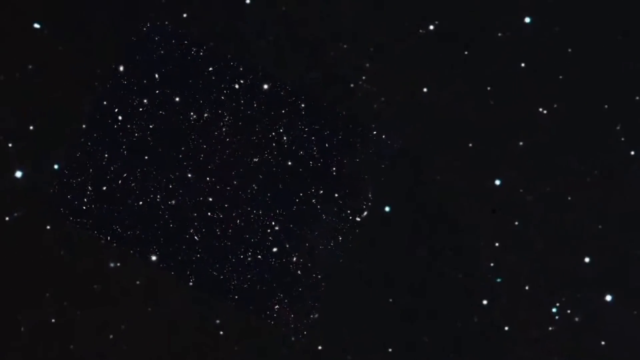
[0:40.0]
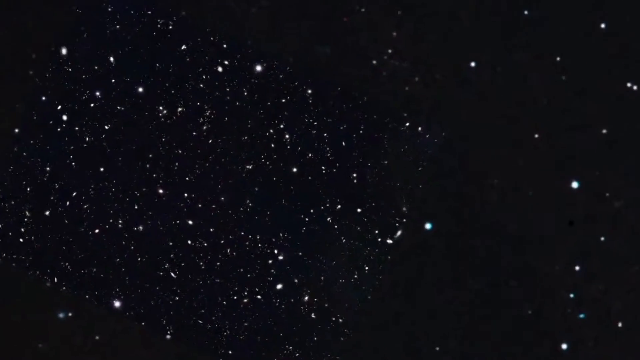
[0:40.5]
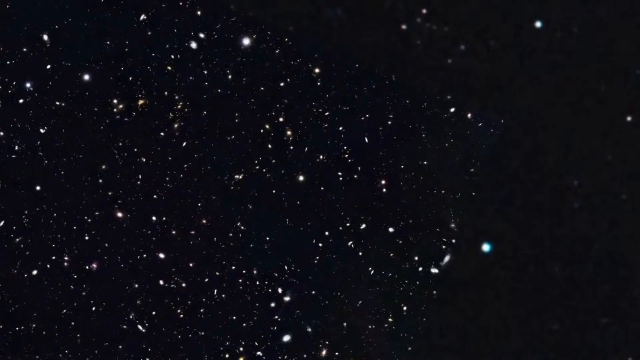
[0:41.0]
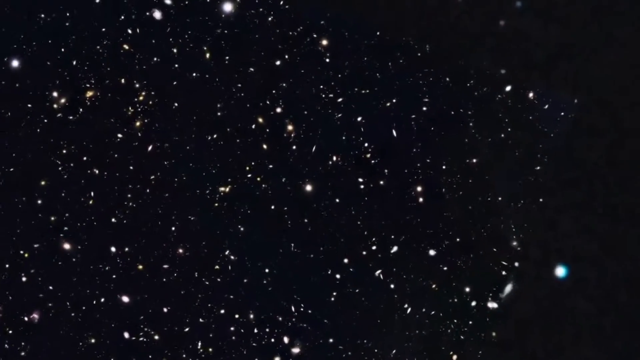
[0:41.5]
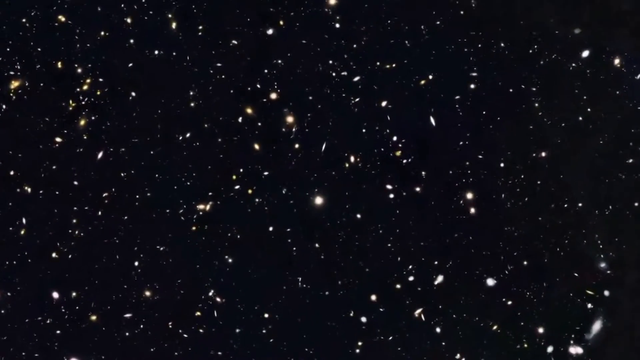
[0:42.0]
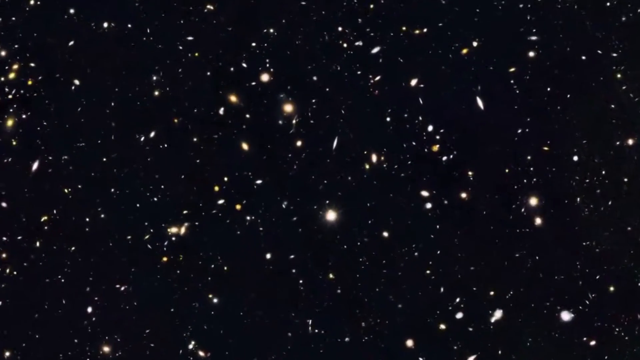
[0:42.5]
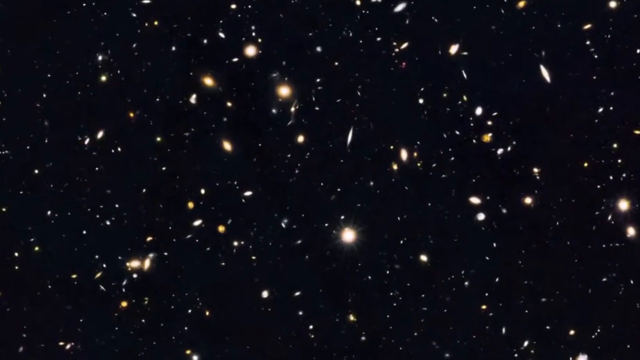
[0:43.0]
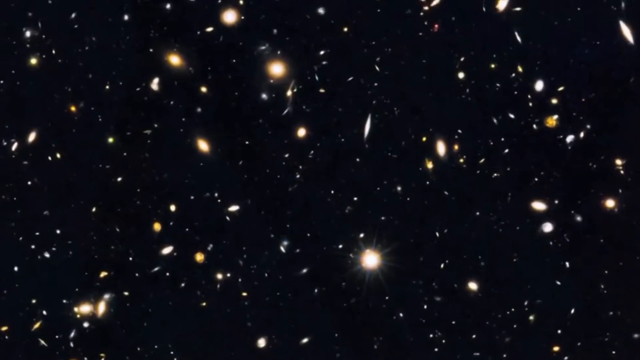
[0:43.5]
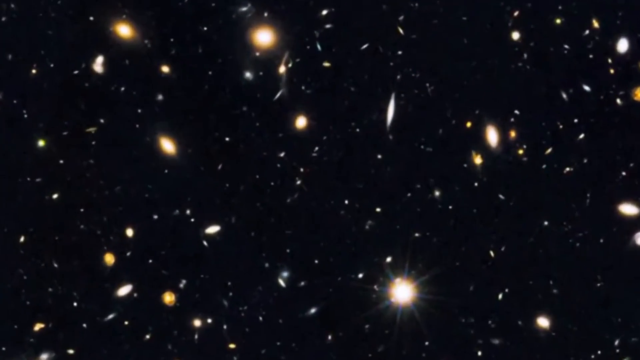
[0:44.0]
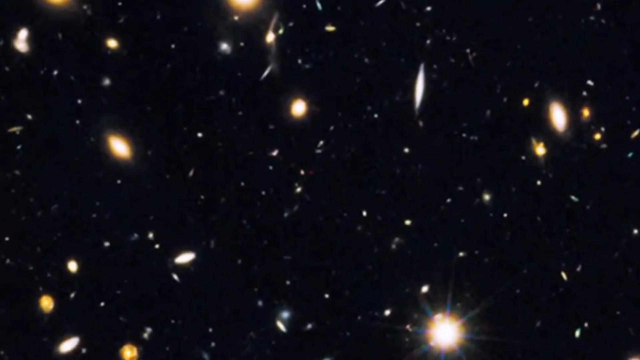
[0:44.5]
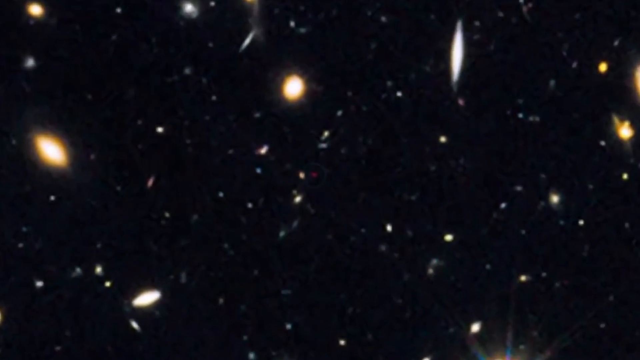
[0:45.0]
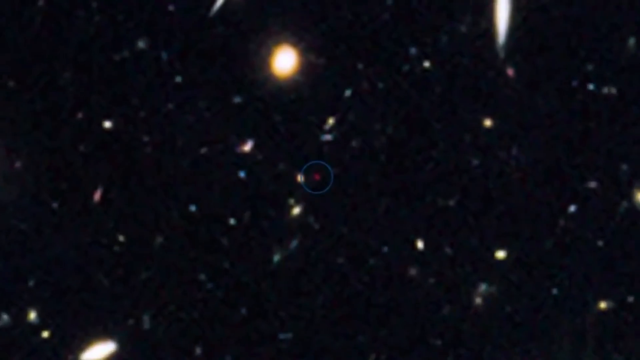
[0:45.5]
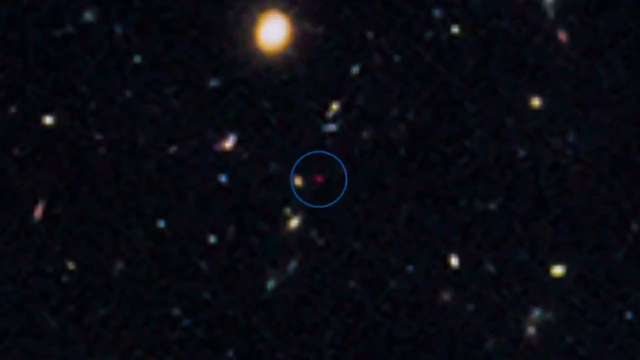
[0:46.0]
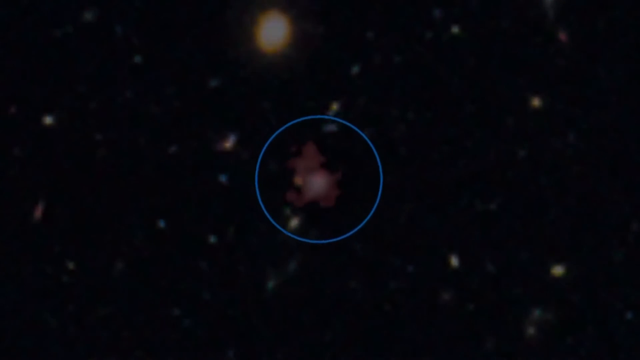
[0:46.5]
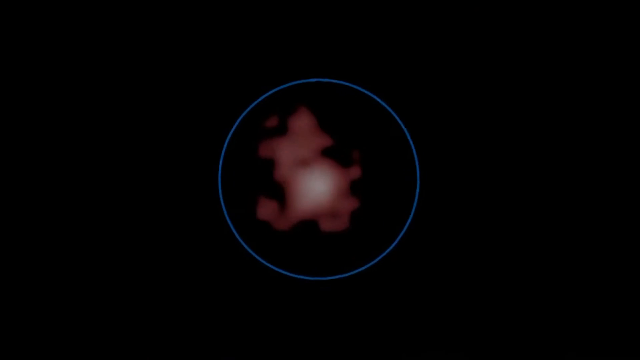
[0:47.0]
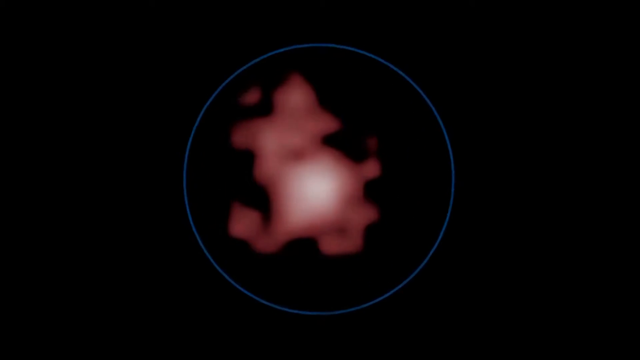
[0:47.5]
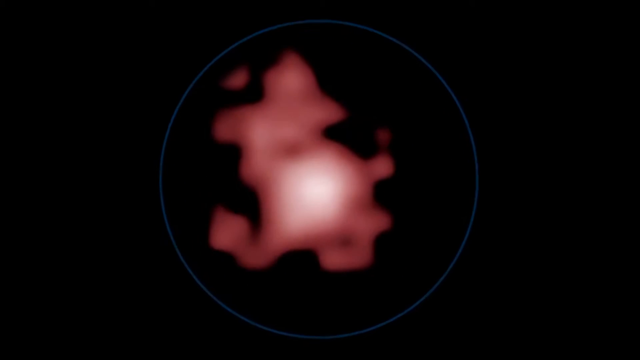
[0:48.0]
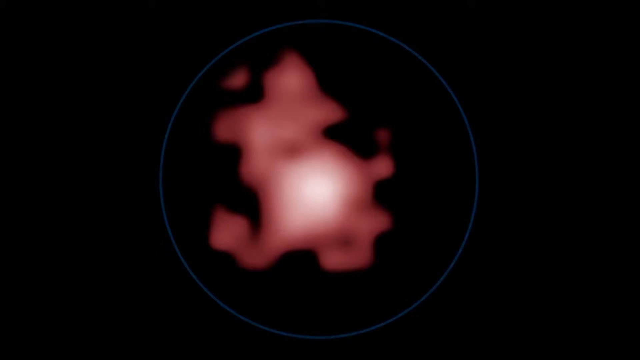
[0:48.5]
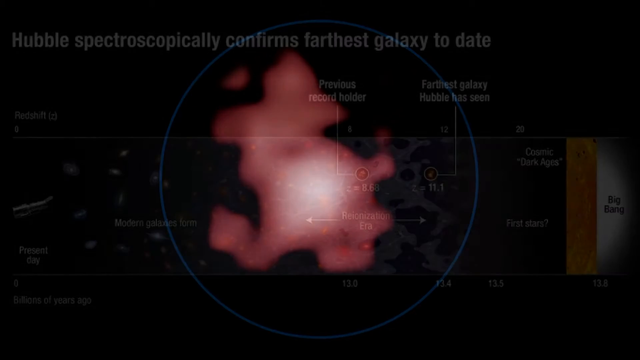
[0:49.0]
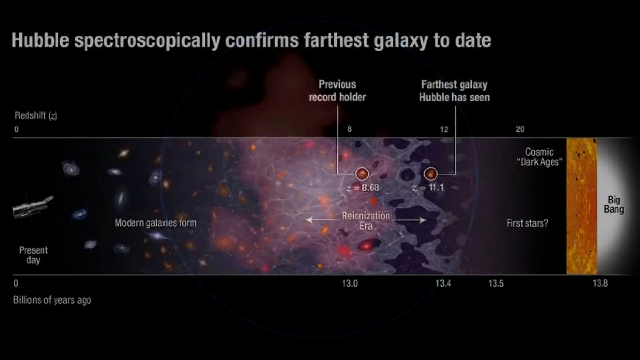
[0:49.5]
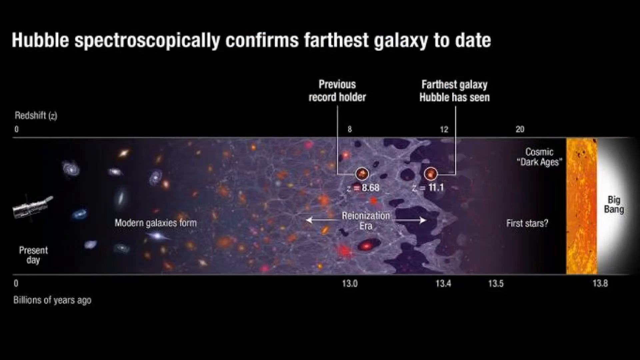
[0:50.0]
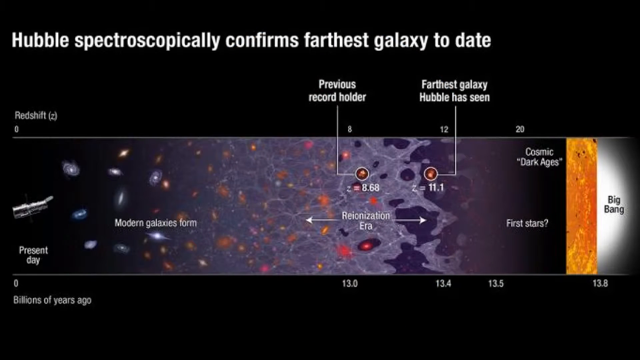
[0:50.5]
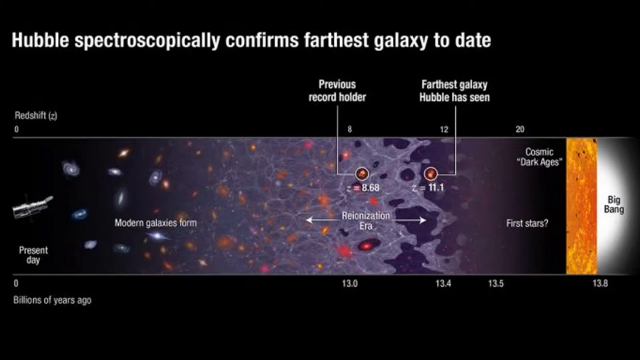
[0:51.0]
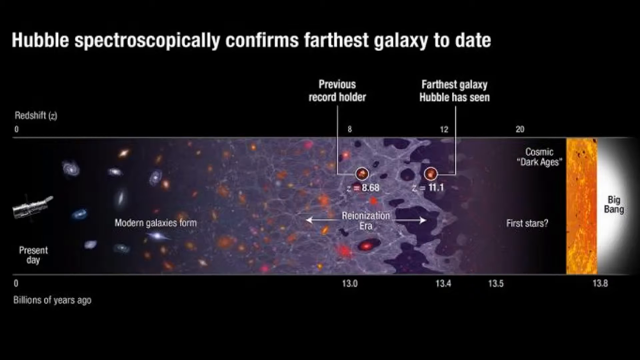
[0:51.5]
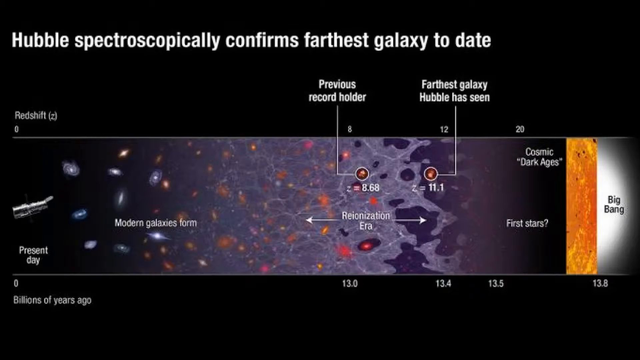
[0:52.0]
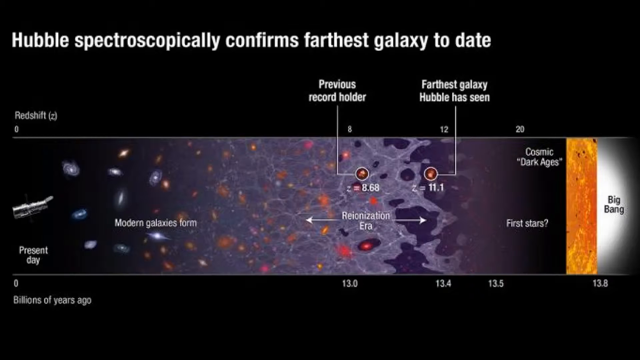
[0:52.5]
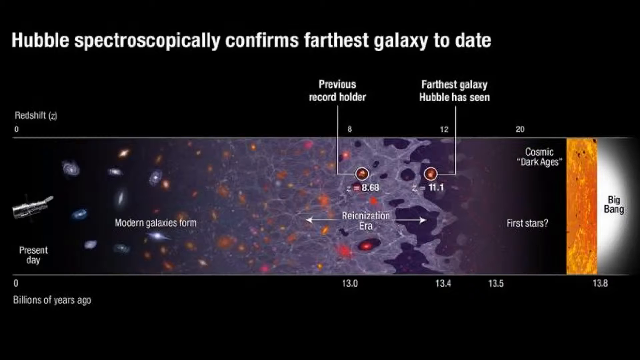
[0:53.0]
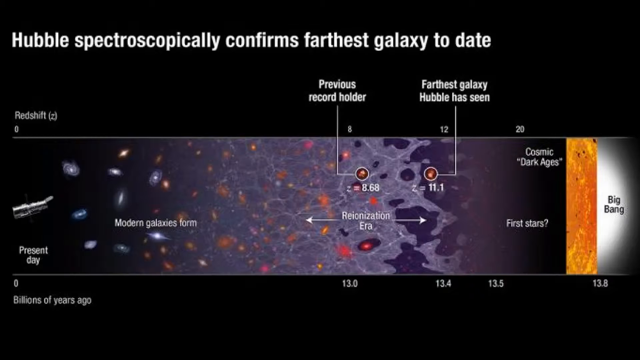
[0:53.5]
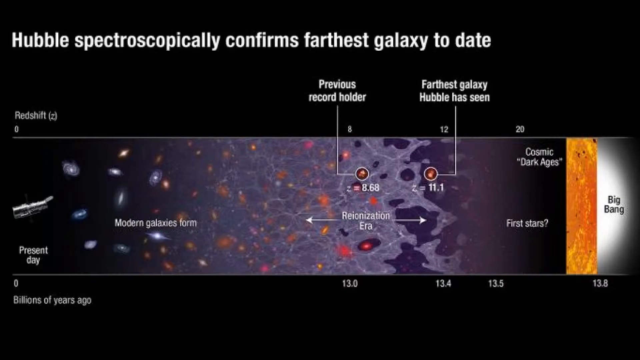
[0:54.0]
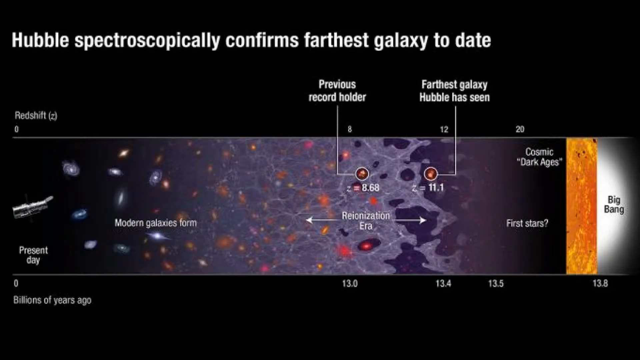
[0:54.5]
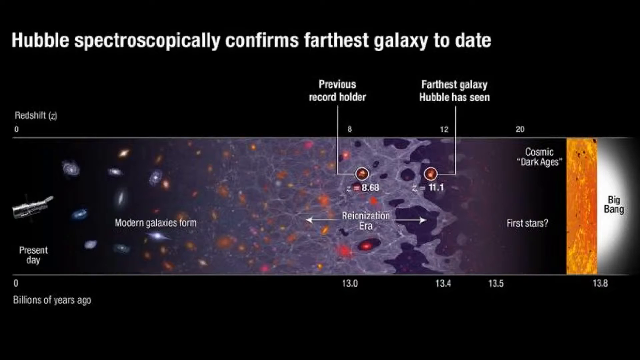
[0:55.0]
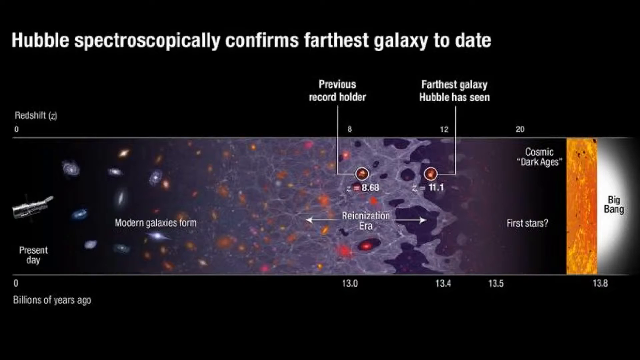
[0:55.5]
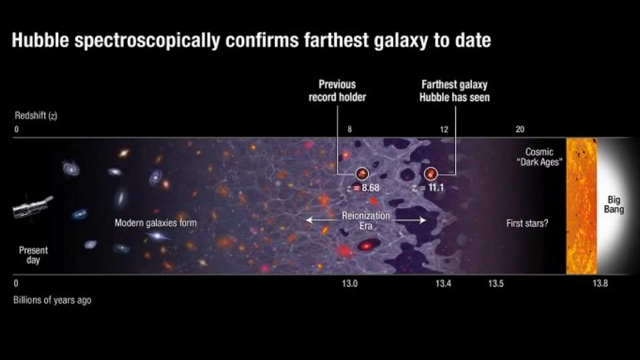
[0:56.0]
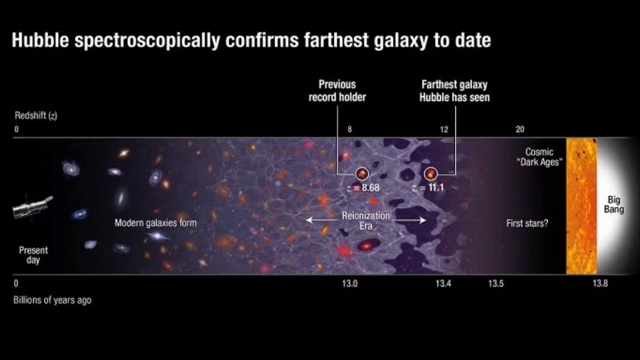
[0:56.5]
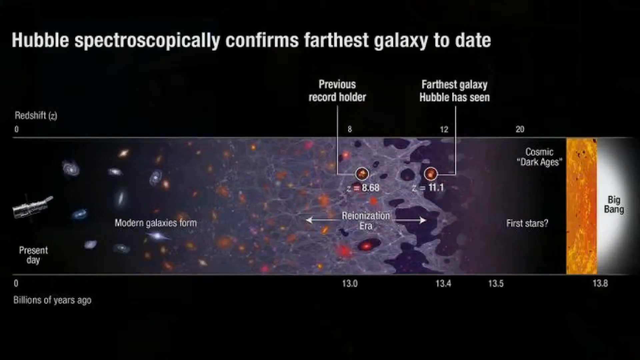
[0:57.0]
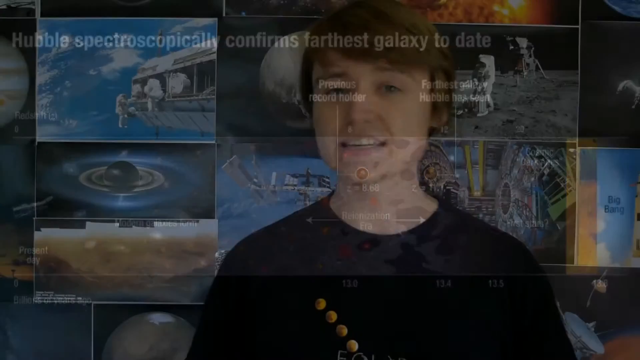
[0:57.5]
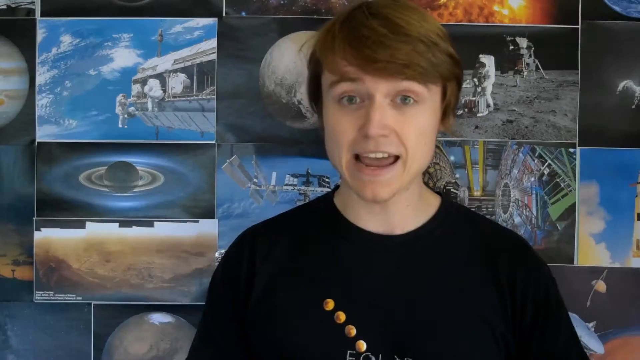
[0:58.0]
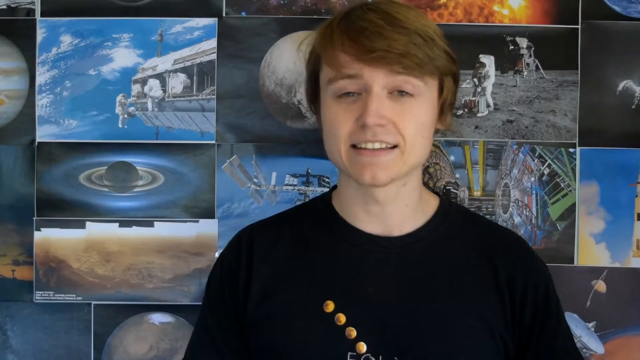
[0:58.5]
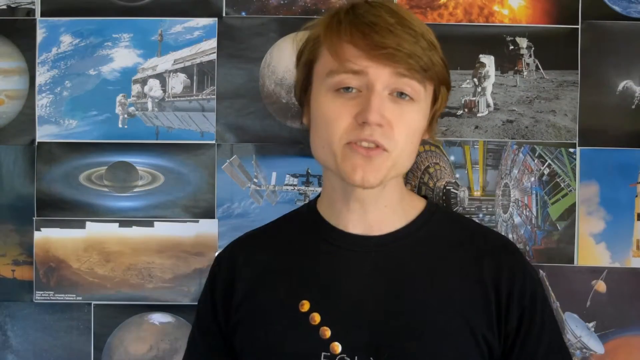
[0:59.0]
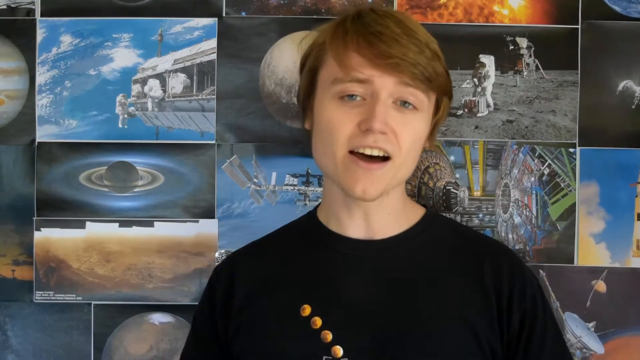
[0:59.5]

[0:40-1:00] The video shows many different things in space, with text reading "Hubble spectroscopically confirms farthest galaxy to date", "previous record holder", "farthest galaxy Hubble has seen", "Cosmic Dark Ages" and "Big Bang".